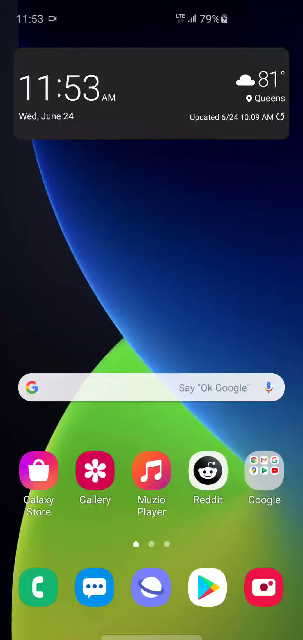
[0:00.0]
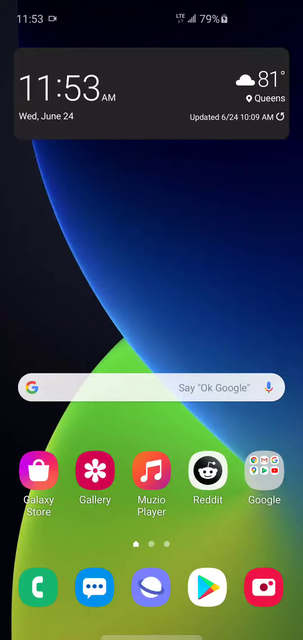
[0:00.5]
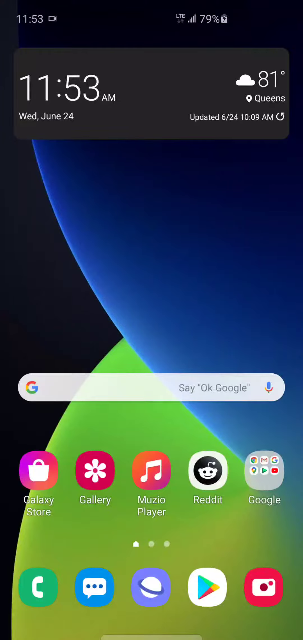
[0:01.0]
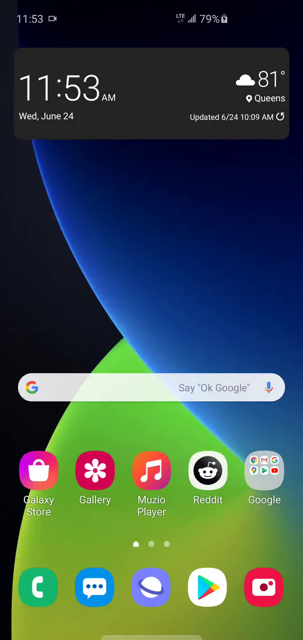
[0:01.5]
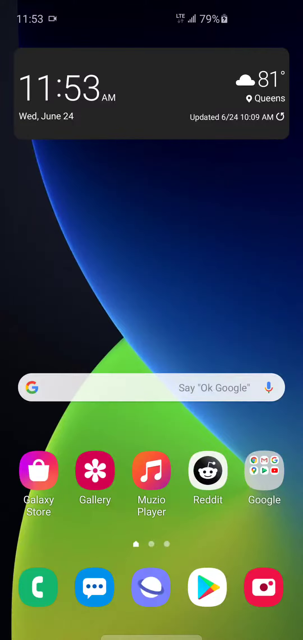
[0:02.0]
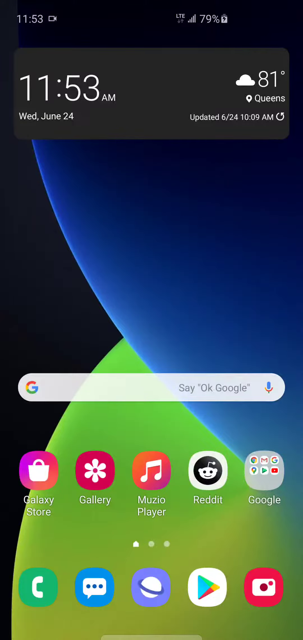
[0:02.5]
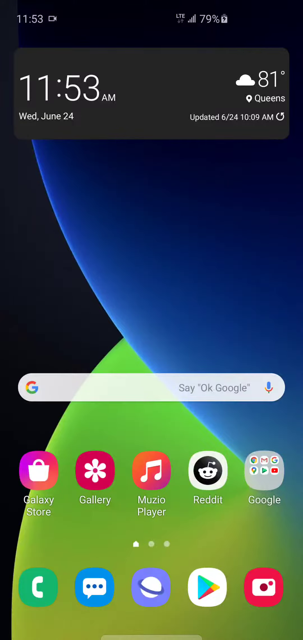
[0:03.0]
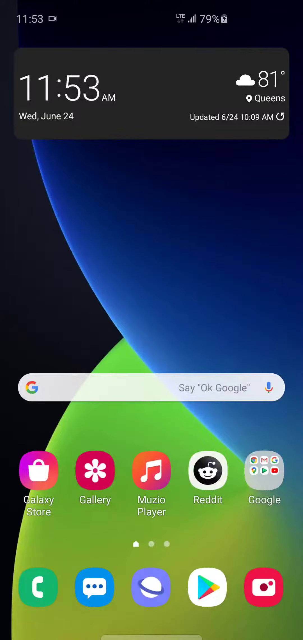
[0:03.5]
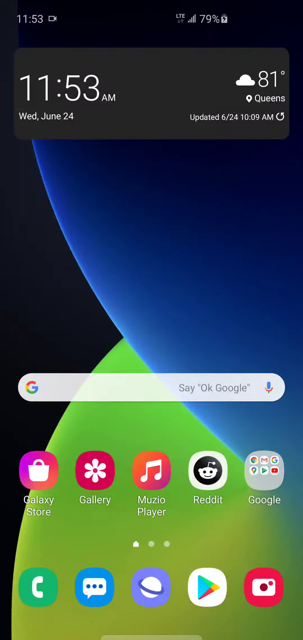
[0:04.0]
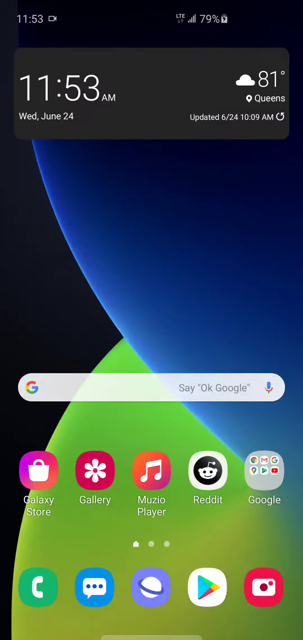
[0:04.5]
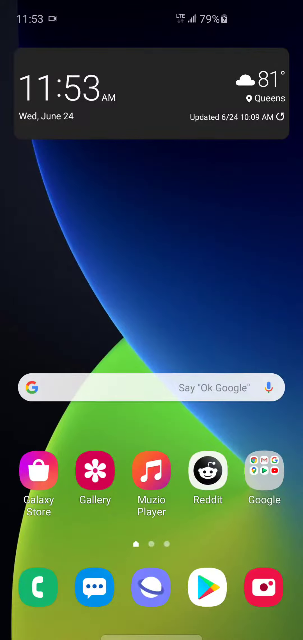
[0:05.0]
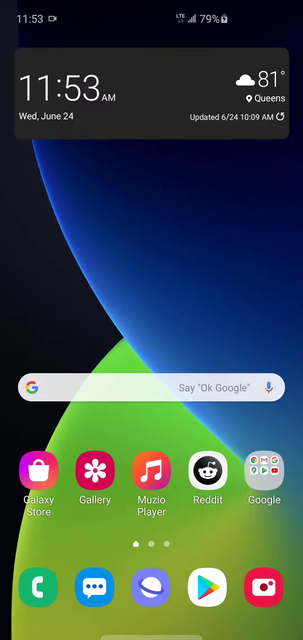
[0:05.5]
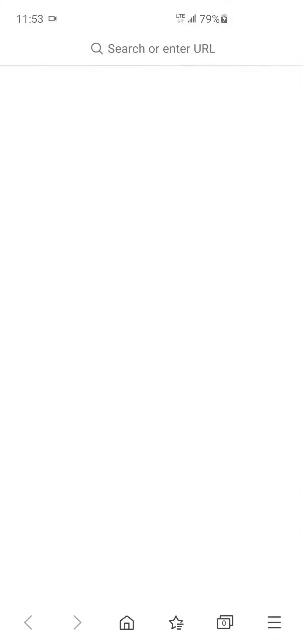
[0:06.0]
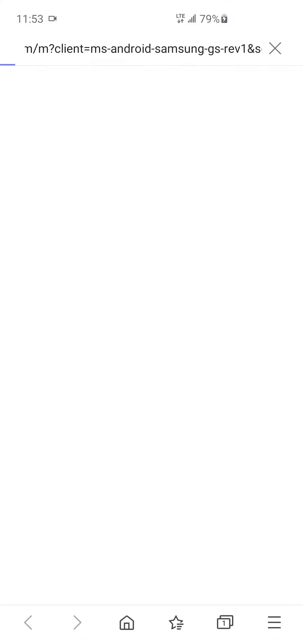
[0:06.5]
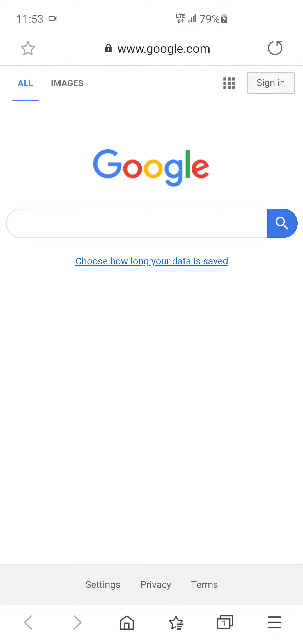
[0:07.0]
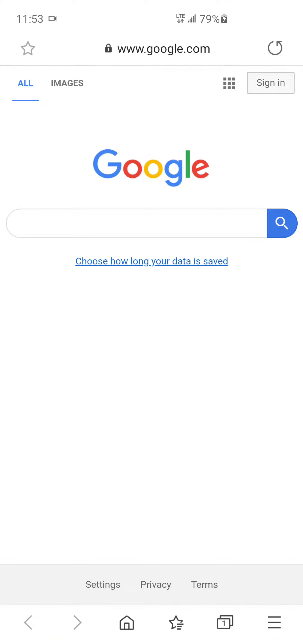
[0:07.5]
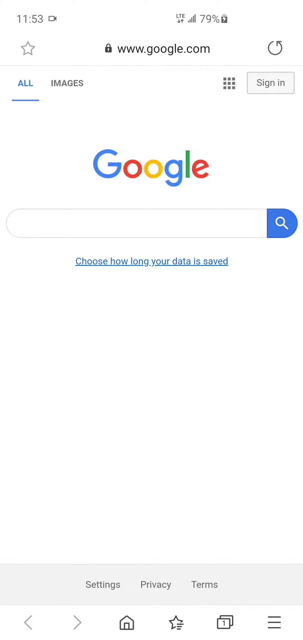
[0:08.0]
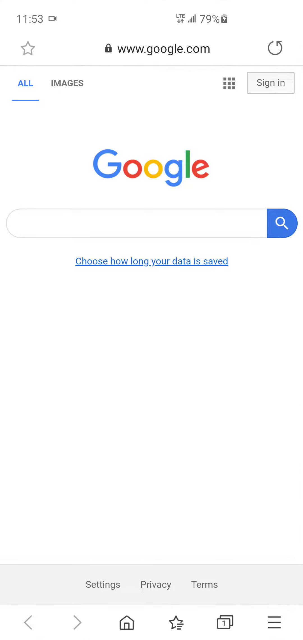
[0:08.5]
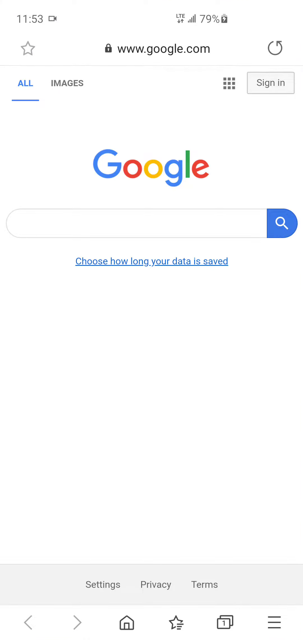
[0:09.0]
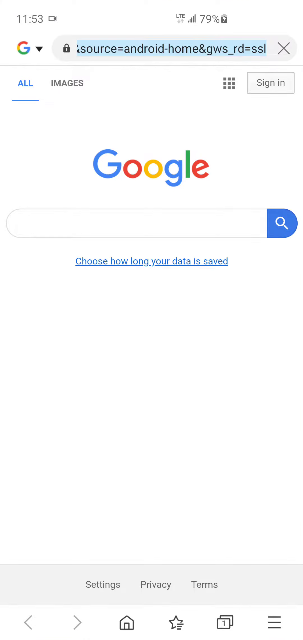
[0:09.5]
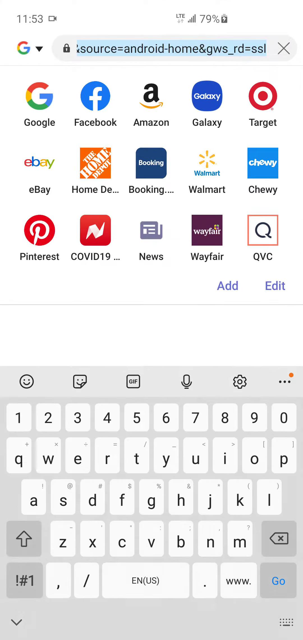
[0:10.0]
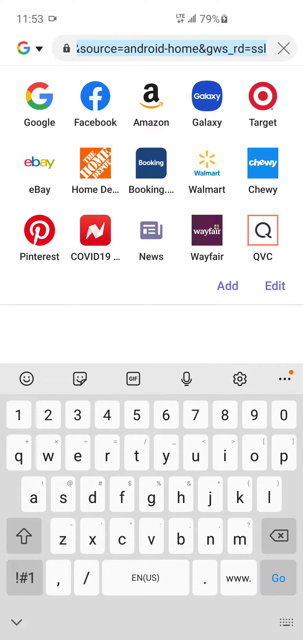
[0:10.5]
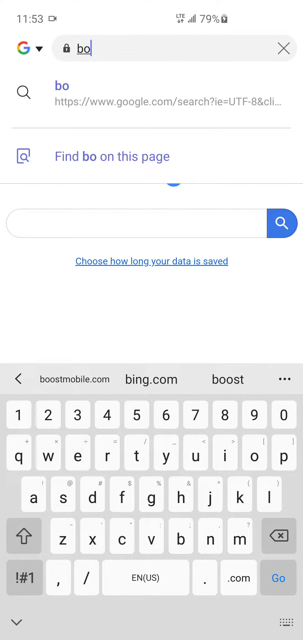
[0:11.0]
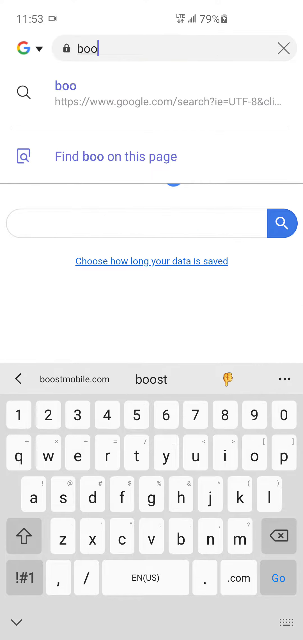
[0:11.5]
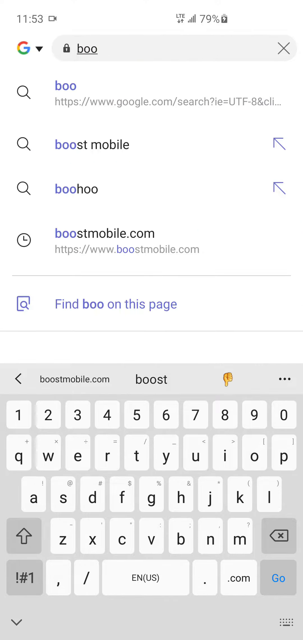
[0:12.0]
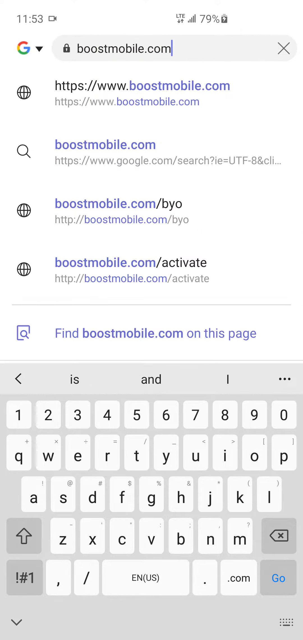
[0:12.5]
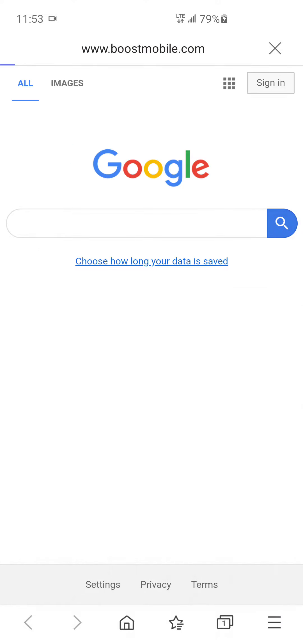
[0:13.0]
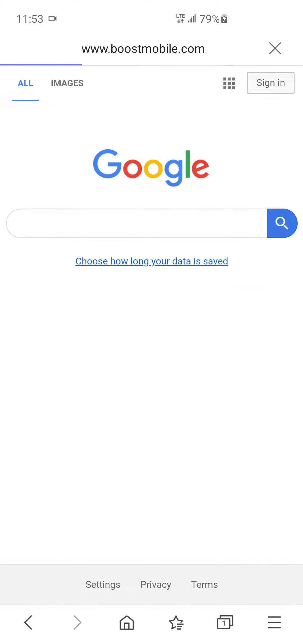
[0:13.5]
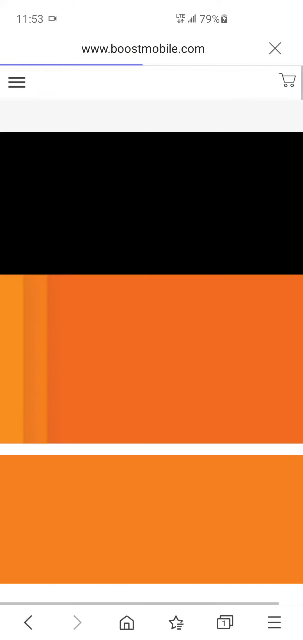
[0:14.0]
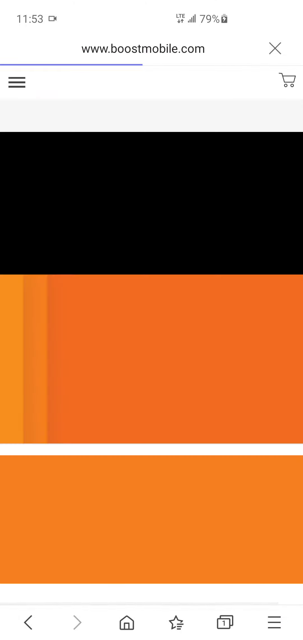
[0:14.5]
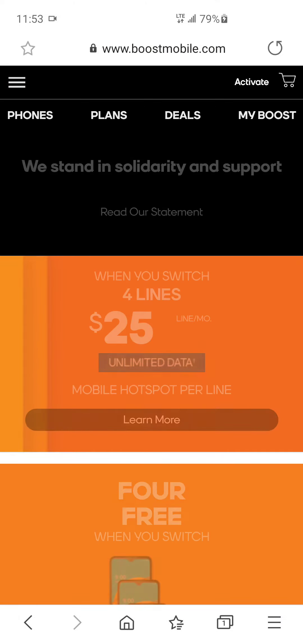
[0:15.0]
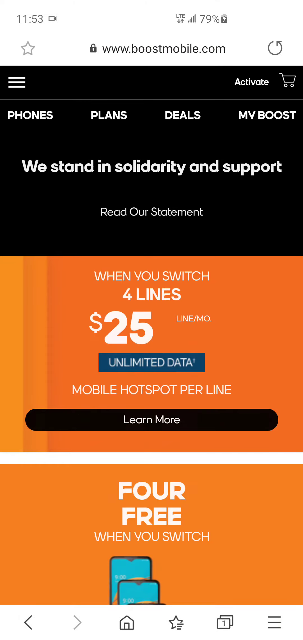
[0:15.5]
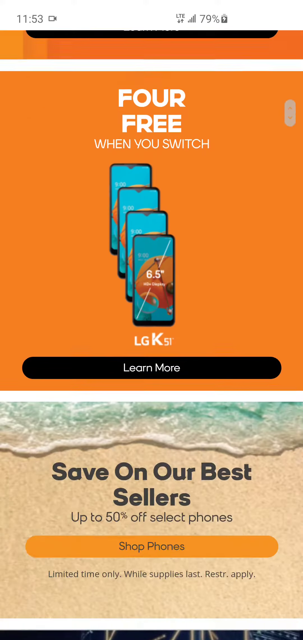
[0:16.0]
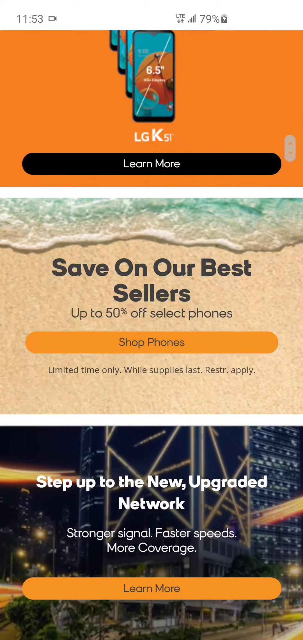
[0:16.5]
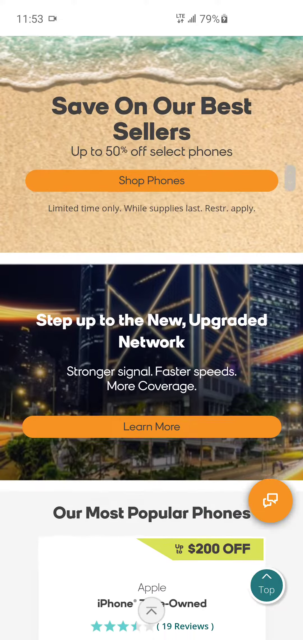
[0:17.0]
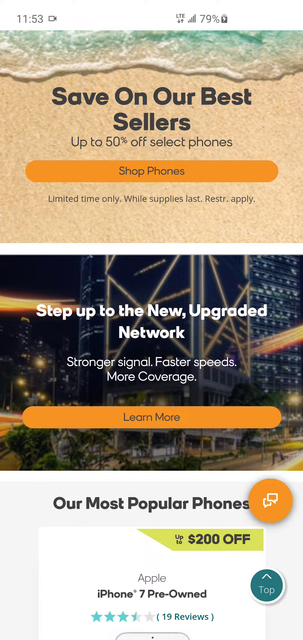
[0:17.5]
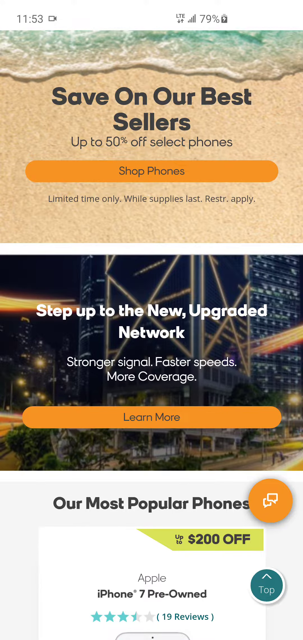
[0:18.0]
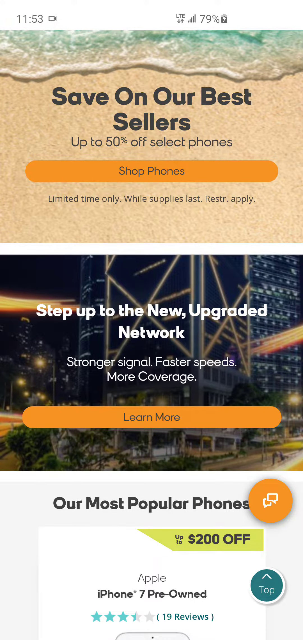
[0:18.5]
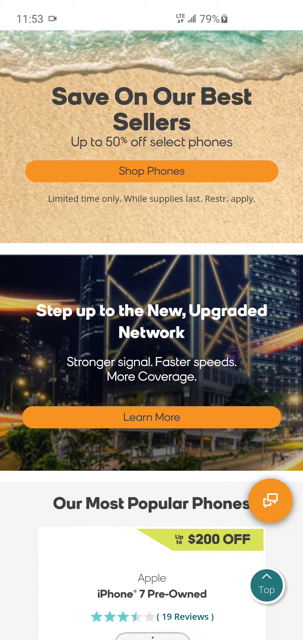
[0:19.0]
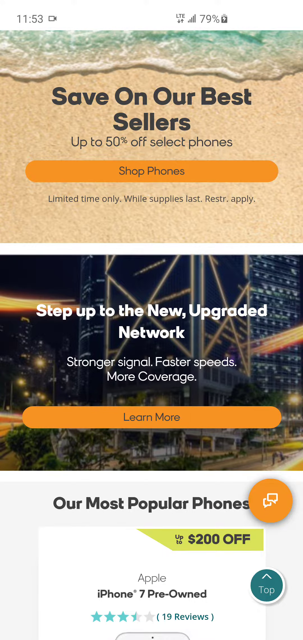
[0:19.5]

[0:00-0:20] The video begins on the home page of a cell phone. The screen shows the typical items, including a battery meter, a clock with the current weather conditions, a Google search bar, and an assortment of apps, including Reddit, gallery, music player, Google suite, Play Store, camera, messenger and the phone app. The screen then changes to Google, and several apps open up; the person apparently is searching their apps. Apps for several different websites appear: Google, Facebook, Amazon, Target, eBay, Home Depot, Booking, Walmart, Chewy, Pinterest, Wayfair and a few others. The person appears to type into the search bar to look for a specific app, goes to BoostMobile.com, and opens the Boost Mobile homepage.